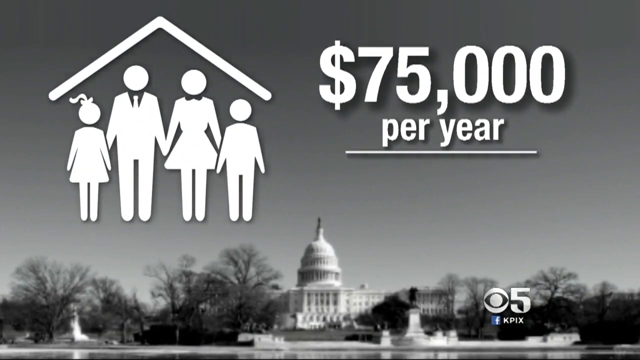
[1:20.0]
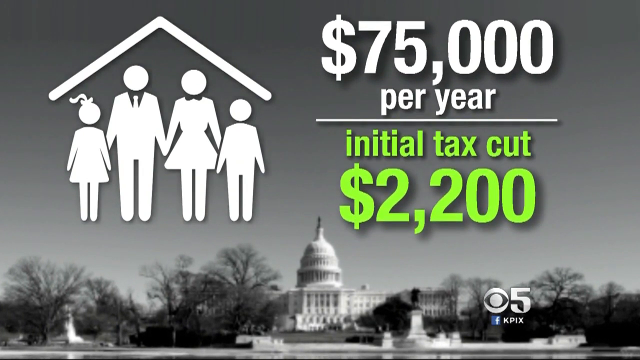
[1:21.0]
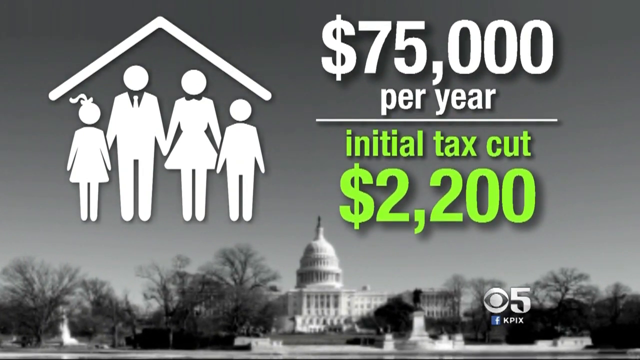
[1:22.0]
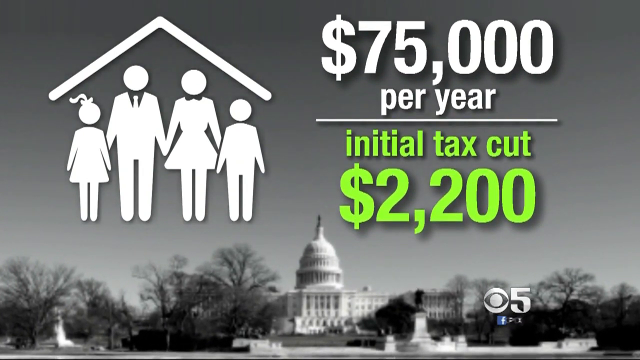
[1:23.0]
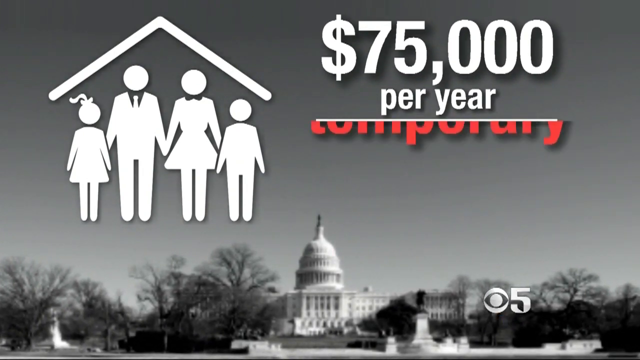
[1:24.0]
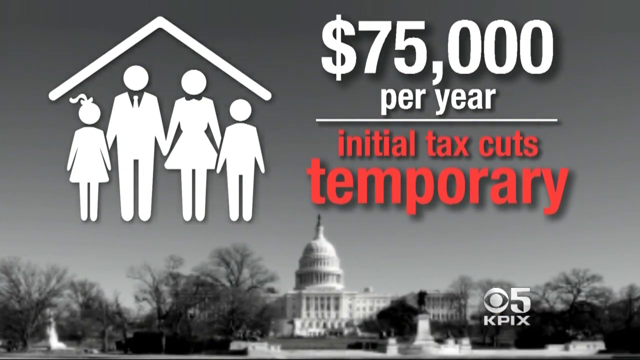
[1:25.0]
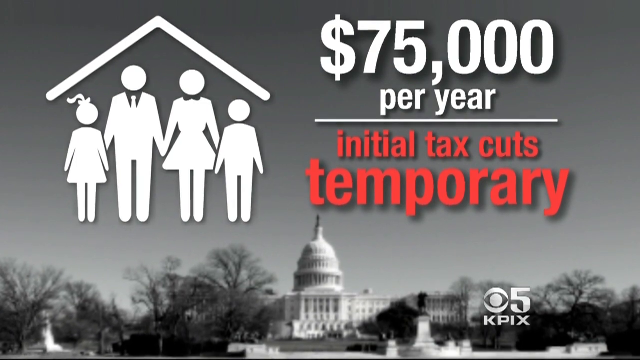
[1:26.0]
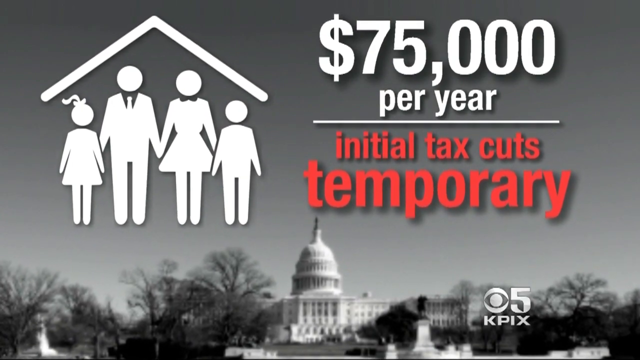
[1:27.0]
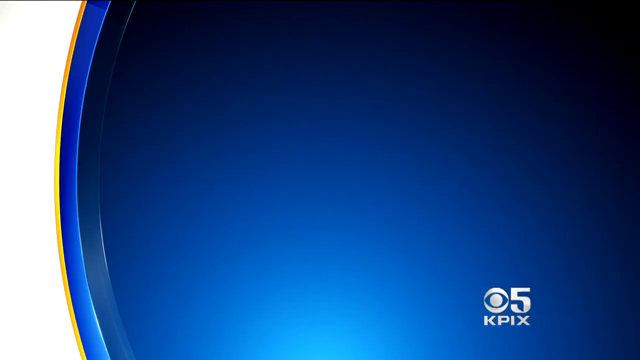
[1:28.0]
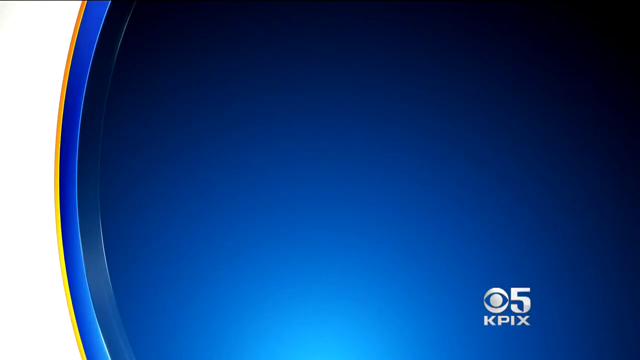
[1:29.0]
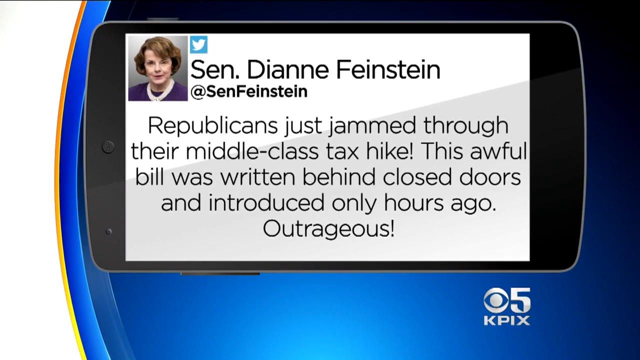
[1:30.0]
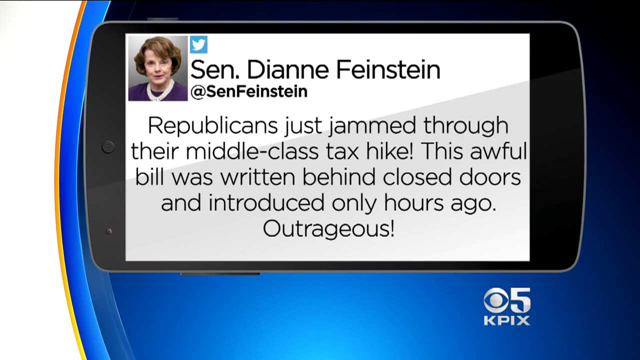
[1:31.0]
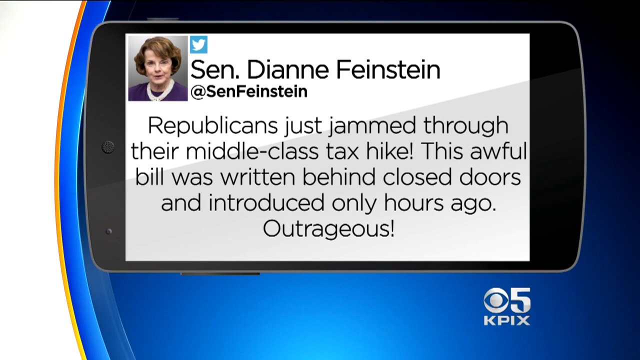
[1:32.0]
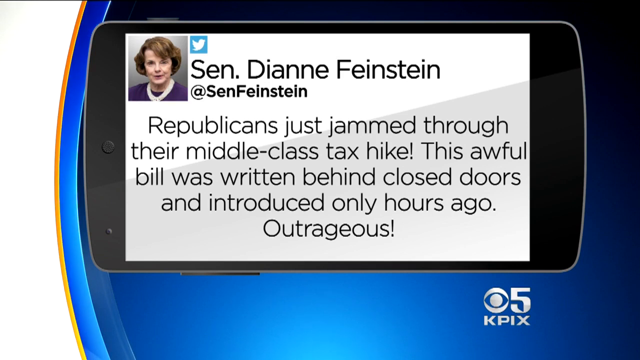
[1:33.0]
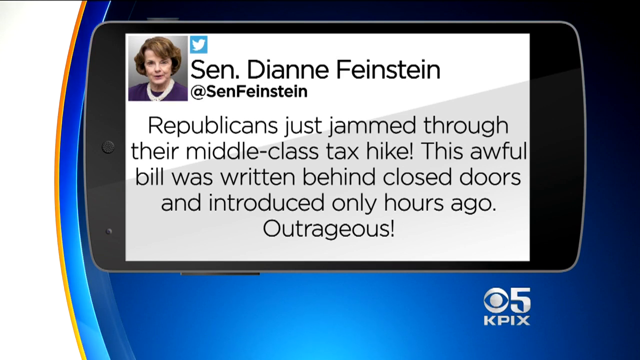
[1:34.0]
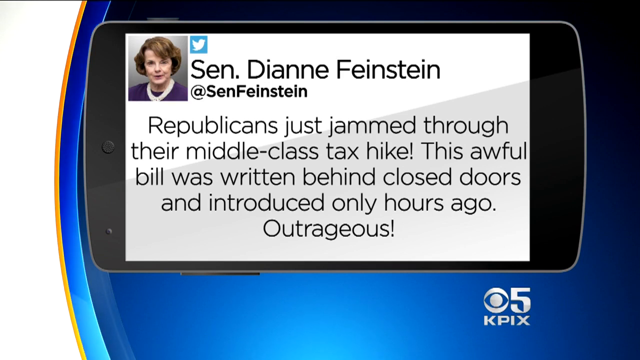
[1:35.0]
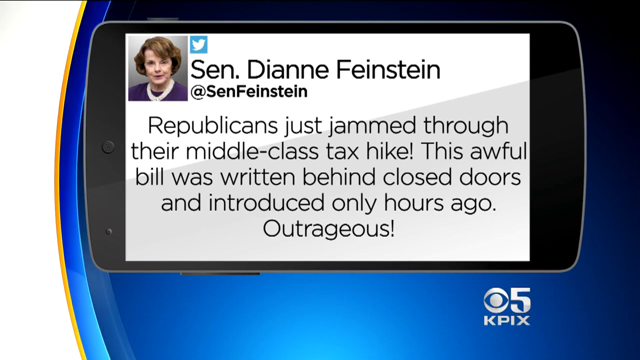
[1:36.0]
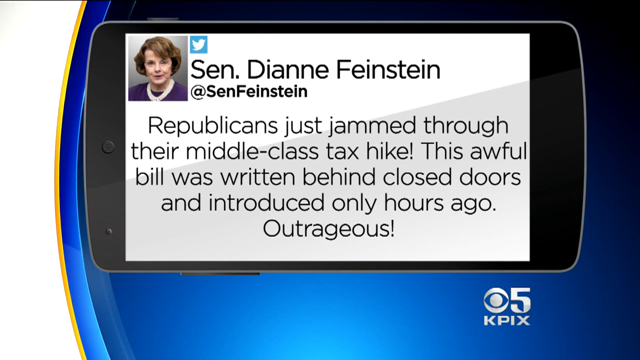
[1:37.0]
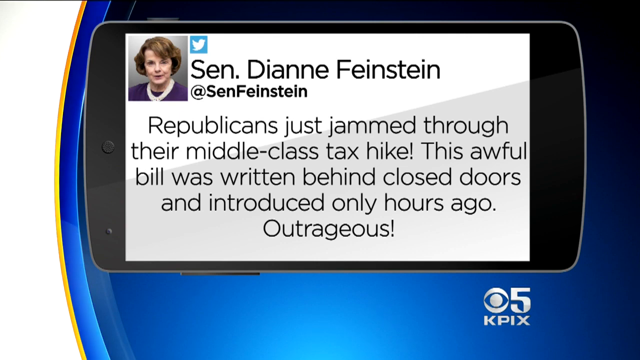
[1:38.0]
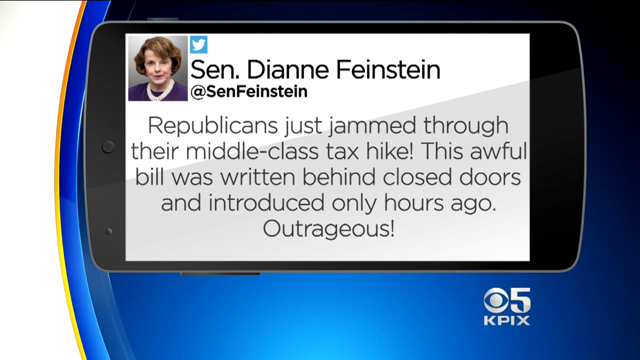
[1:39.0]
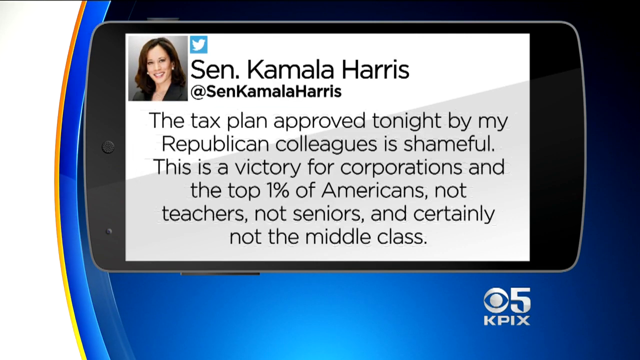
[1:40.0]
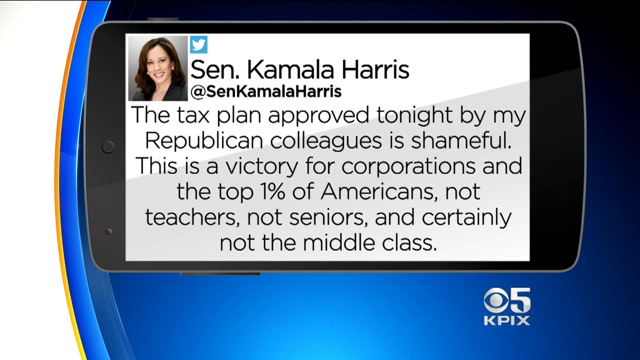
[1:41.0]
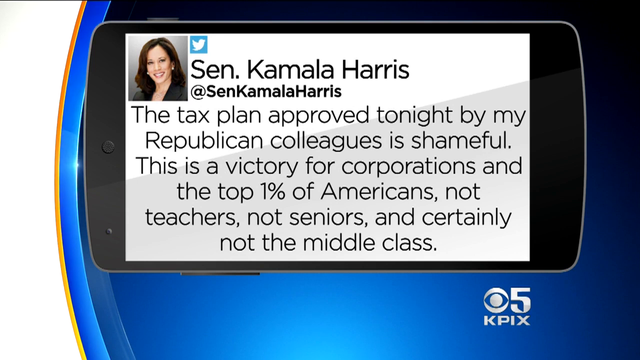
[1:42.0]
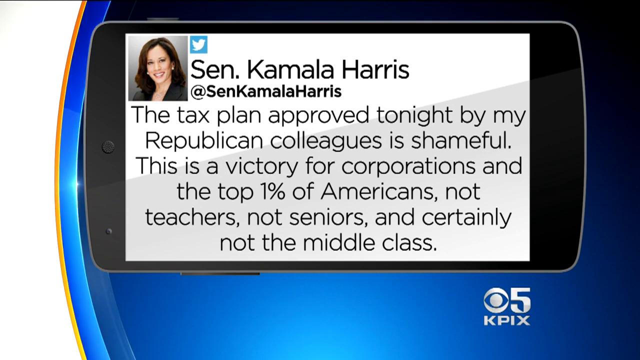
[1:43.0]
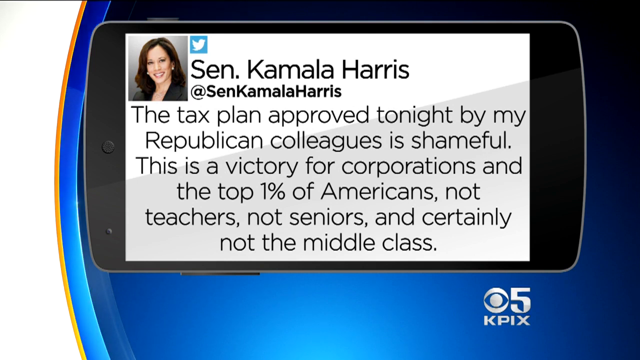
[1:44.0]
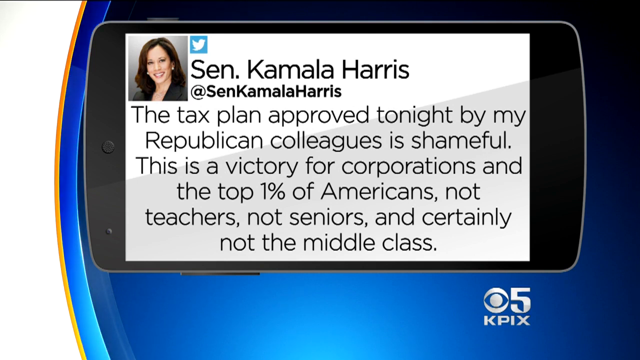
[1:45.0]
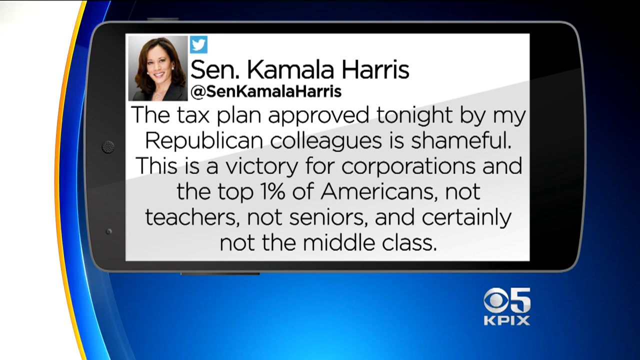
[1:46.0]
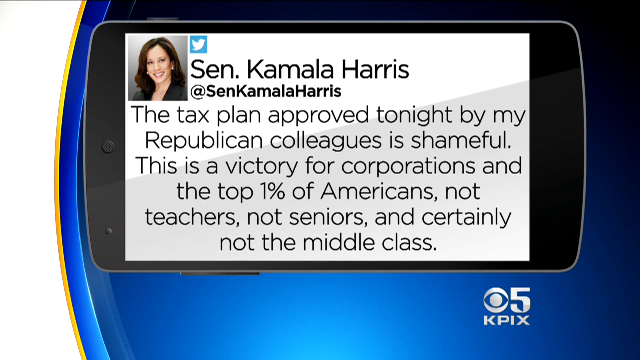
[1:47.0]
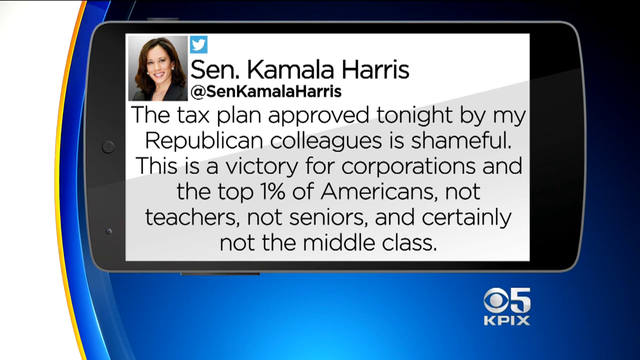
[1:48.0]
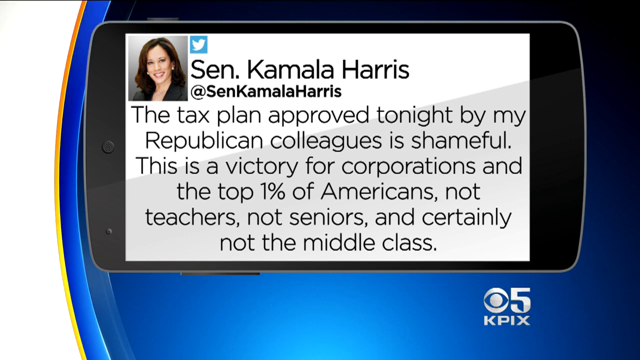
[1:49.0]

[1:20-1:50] The black and white background shows the outline of a family of four with the outline of a roof over their heads and the text "$75,000 per year". A line goes across the screen, then green text reads "initial tax cut, $2,200" and red text reads "initial tax cuts, temporarily". That disappears, and a tweet appears on what looks like an iPad, from Senator Diane Feinstein, reading: "Republicans just jammed through their middle-class tax hike! This awful bill was written behind closed doors and introduced only hours ago." Next comes a tweet from Senator Kamala Harris: "The tax plan approved tonight by my Republican colleagues is shameful. This is a victory for corporations and the top 1% of Americans, not teachers, not senators, and certainly not the middle class."